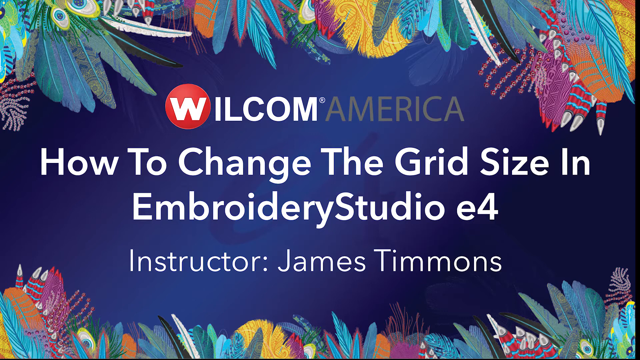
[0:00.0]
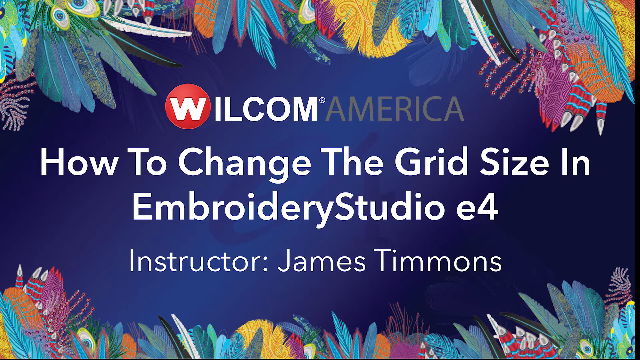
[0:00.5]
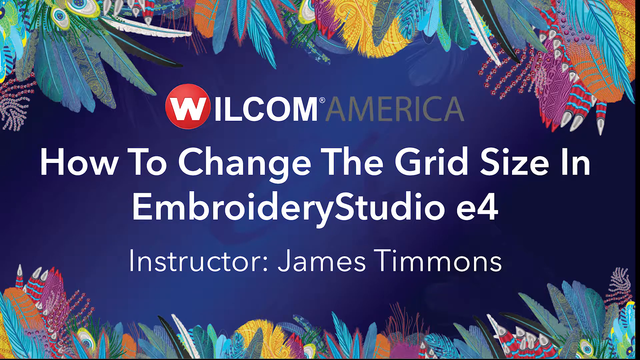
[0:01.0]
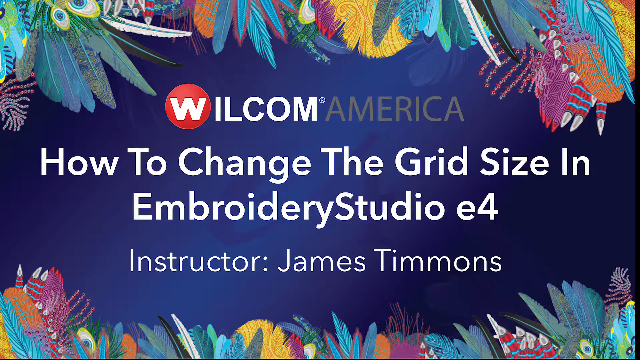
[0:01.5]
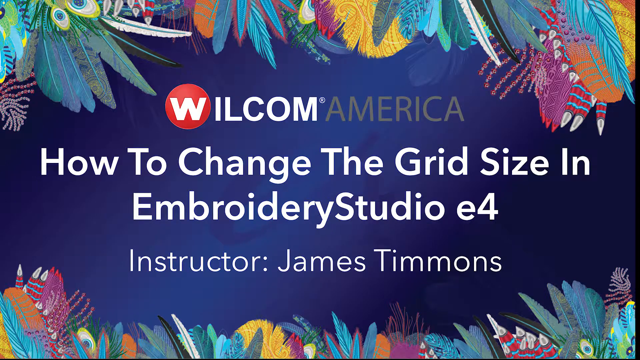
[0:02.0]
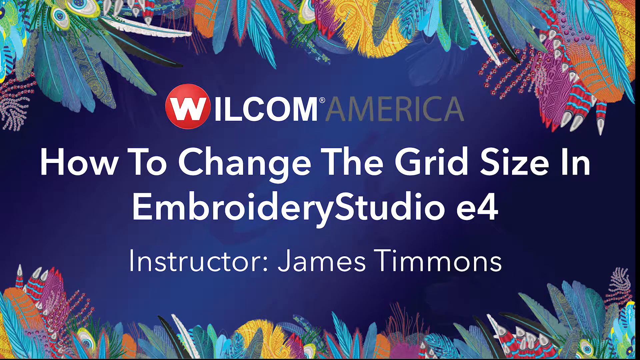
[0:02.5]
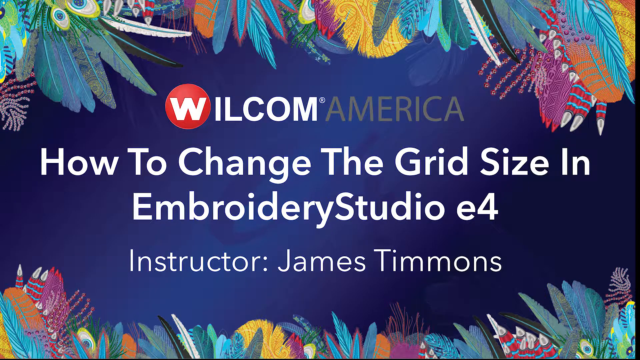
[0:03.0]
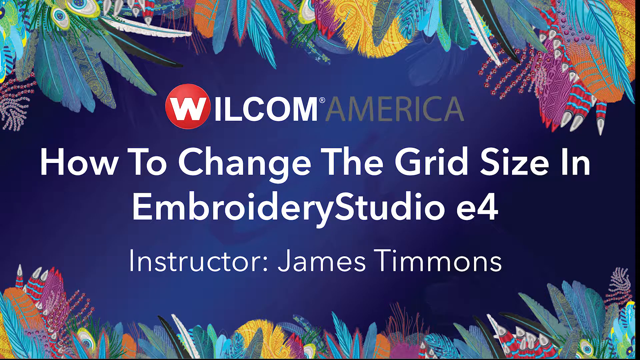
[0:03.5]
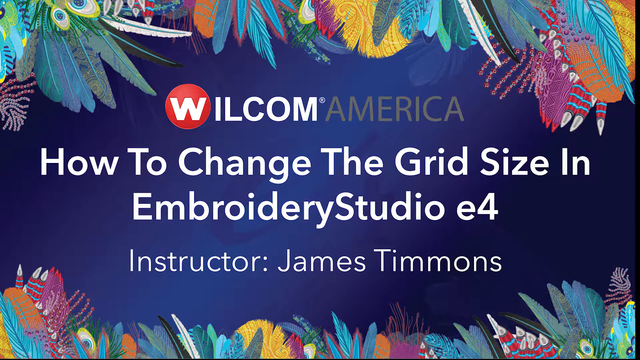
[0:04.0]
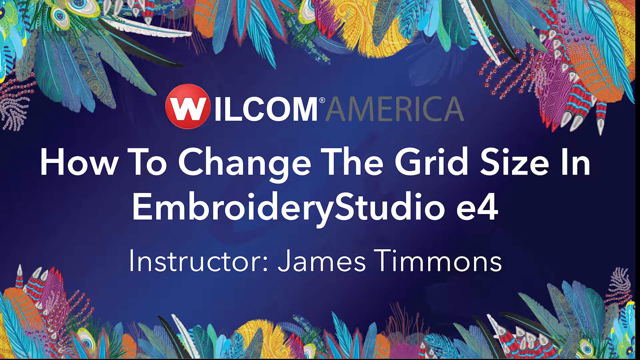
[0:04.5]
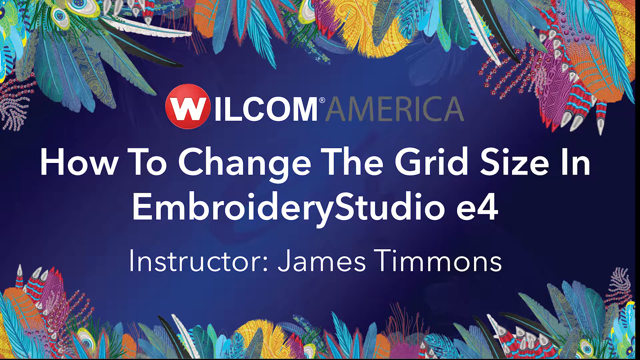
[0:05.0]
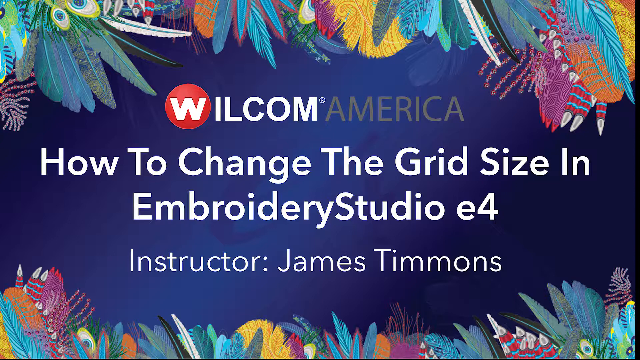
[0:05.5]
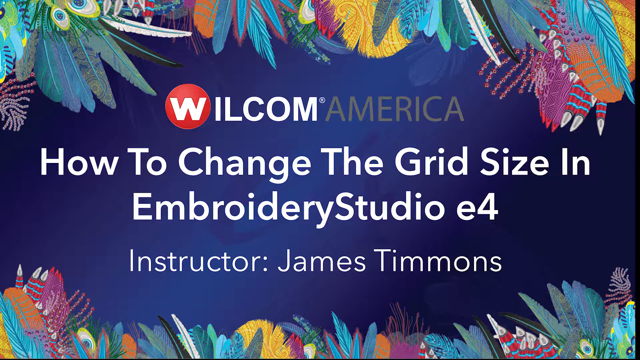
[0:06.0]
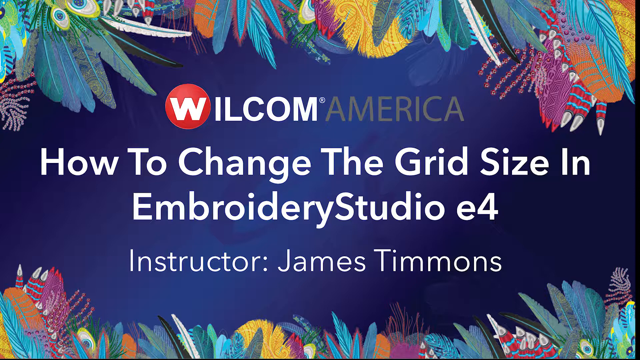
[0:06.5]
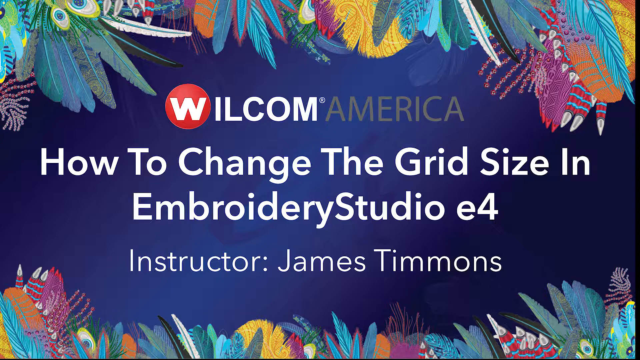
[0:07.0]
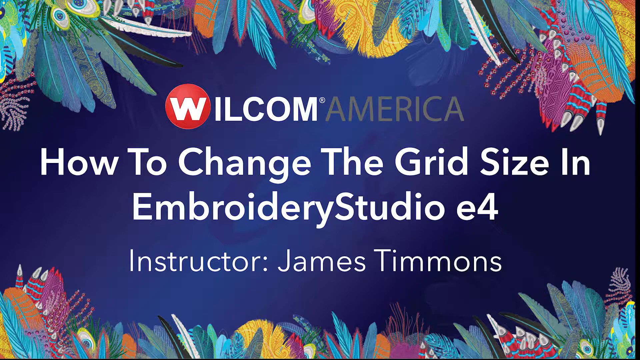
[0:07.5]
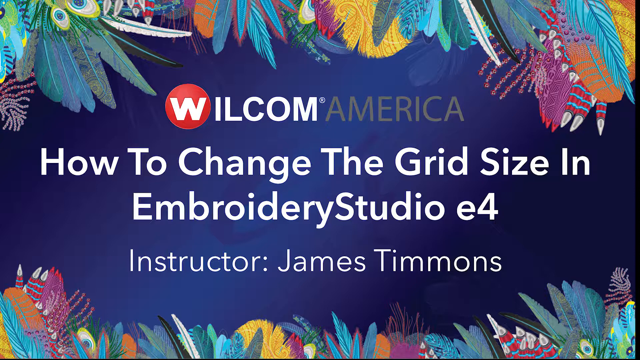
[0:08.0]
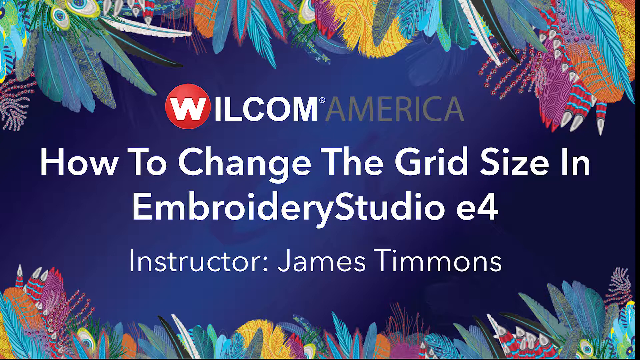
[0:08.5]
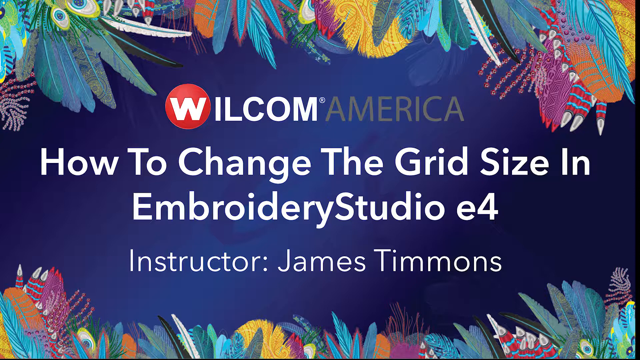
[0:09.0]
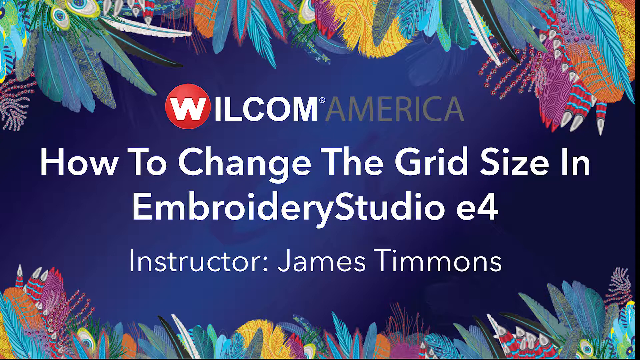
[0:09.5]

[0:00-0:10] A presentation by James Timmons, an instructor, on how to change the grid size in Embroidery Studio E4; the instructor and the video are from Wilcom America. The opening image has a blue background filled with various colorful feathers from different birds, including one from a peacock and one from a parrot. The colors range from blue to purple to red to orange to yellow, and there are many feathers with multiple colors on them. The Wilcom logo is a white W with a red circle around it.